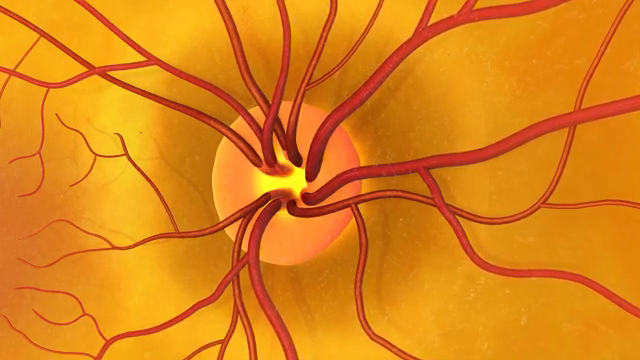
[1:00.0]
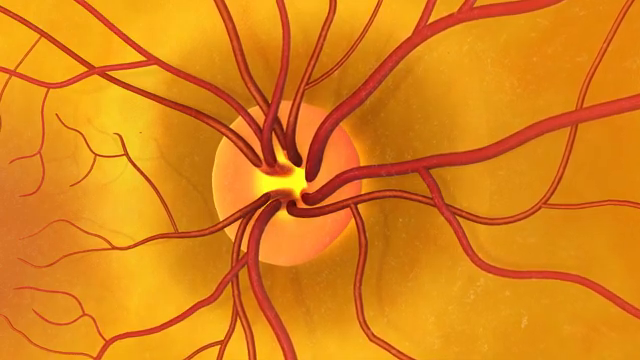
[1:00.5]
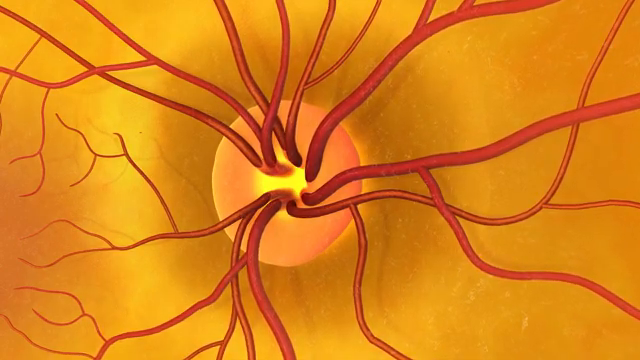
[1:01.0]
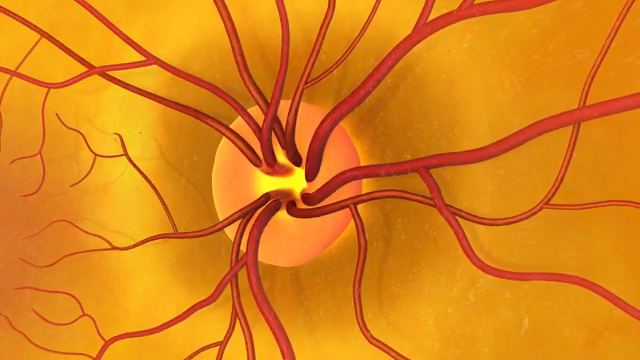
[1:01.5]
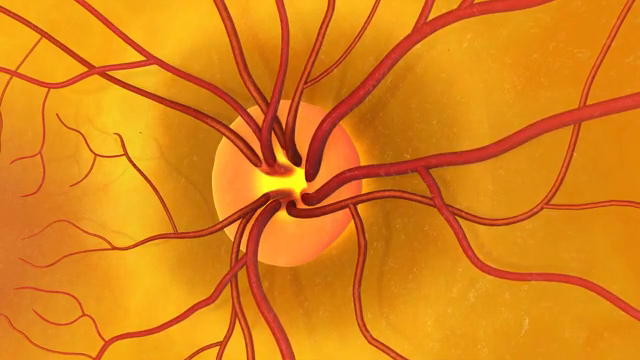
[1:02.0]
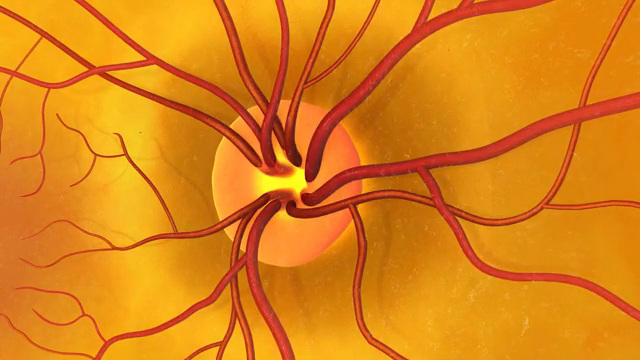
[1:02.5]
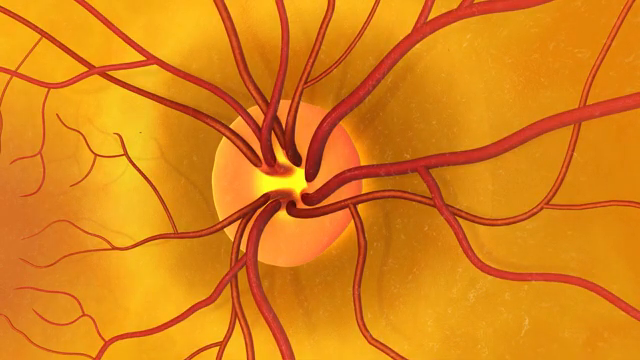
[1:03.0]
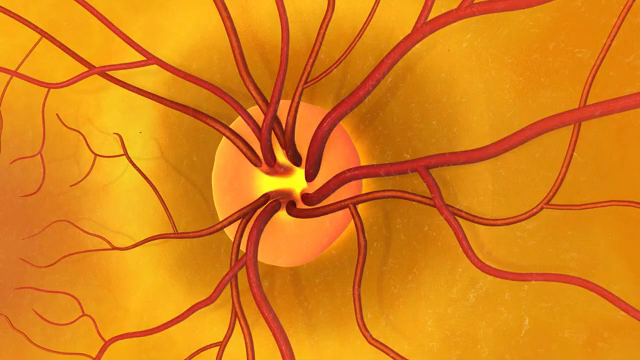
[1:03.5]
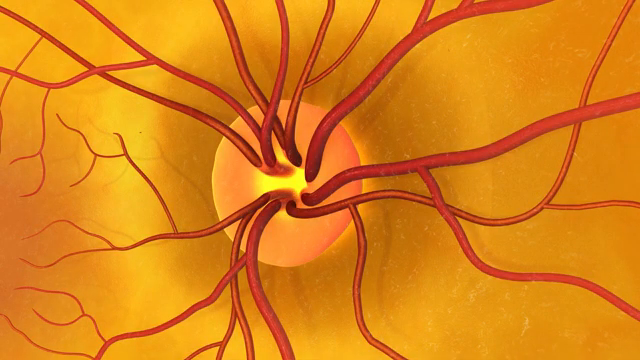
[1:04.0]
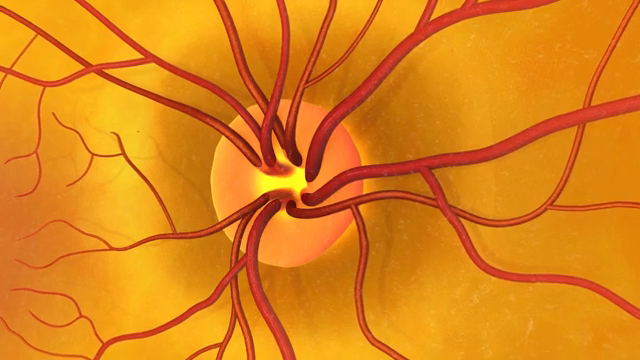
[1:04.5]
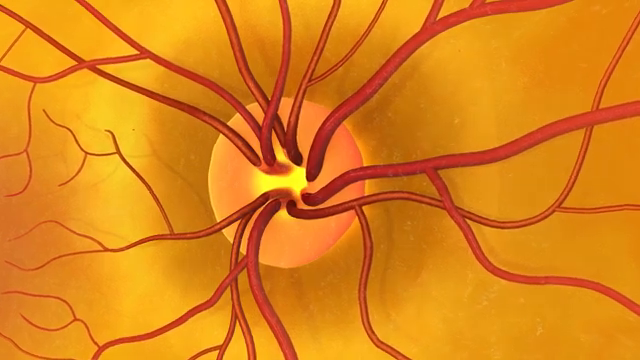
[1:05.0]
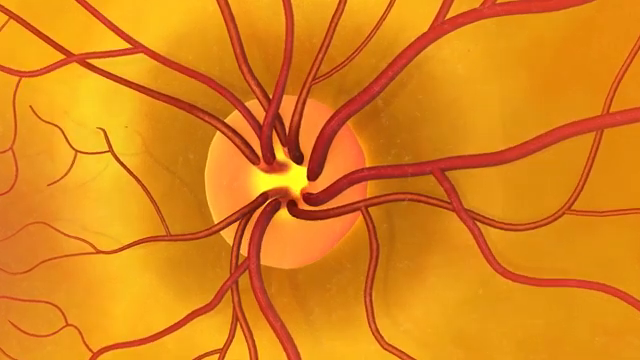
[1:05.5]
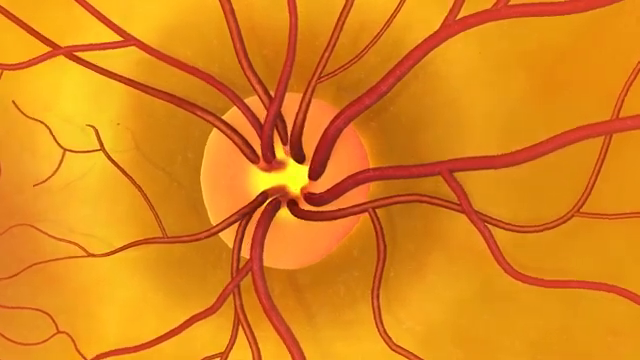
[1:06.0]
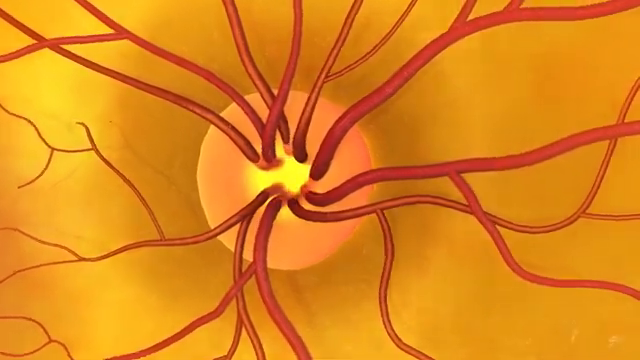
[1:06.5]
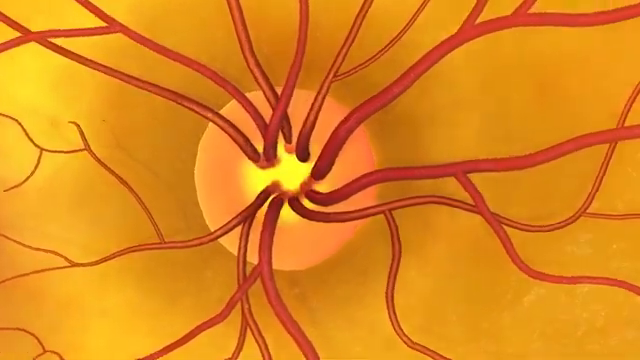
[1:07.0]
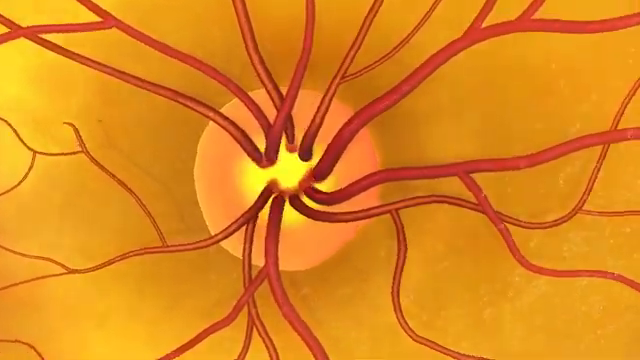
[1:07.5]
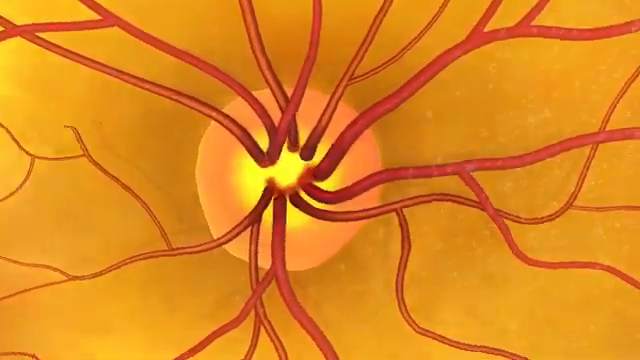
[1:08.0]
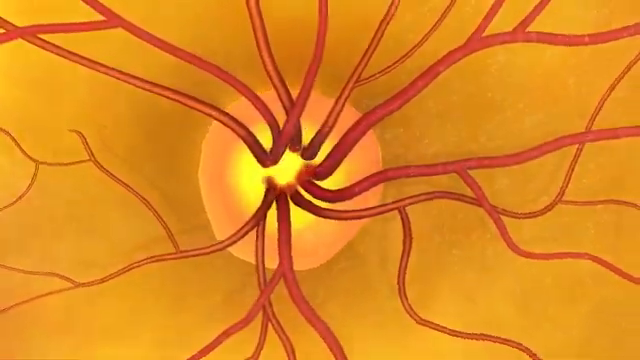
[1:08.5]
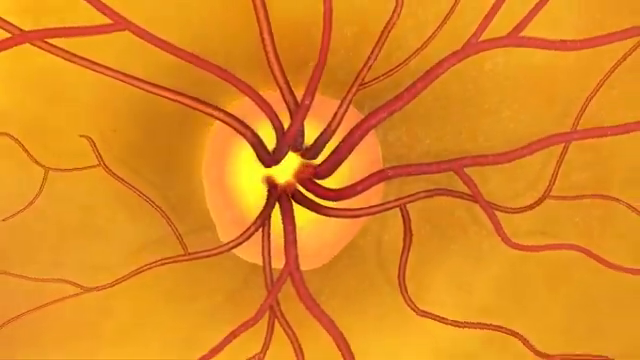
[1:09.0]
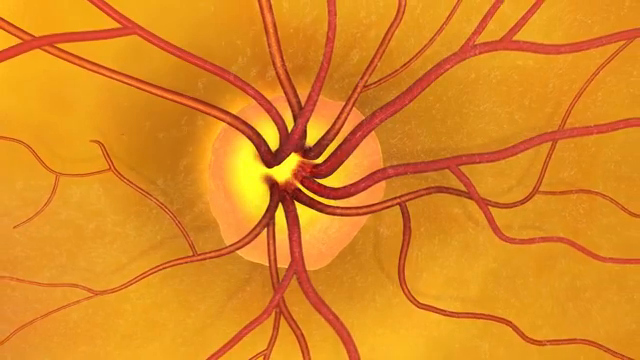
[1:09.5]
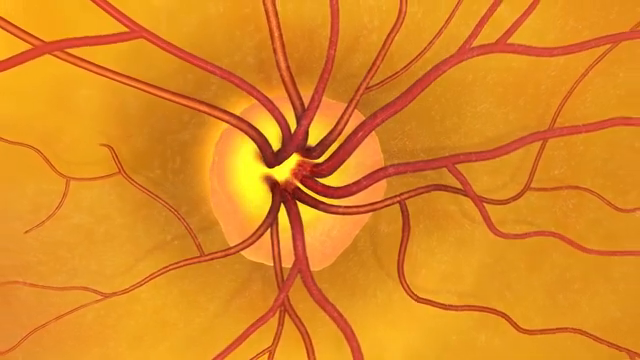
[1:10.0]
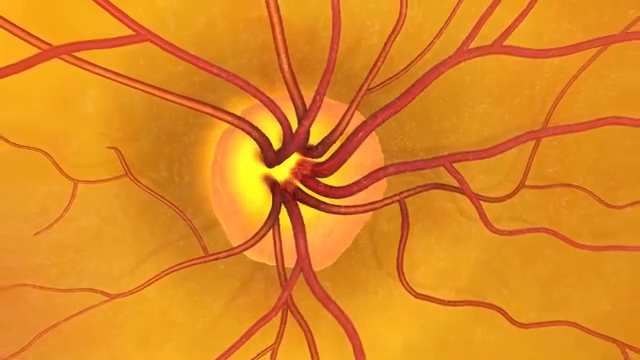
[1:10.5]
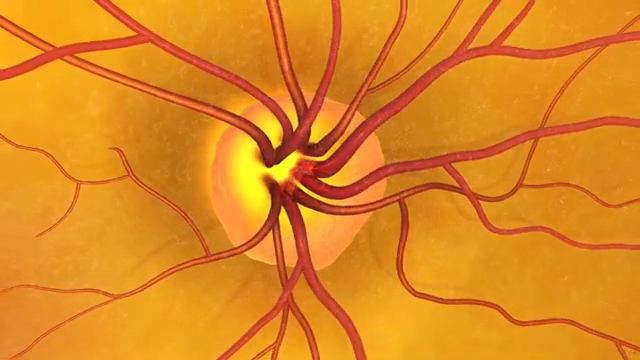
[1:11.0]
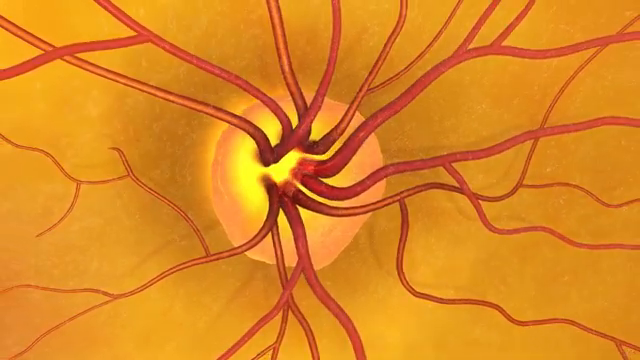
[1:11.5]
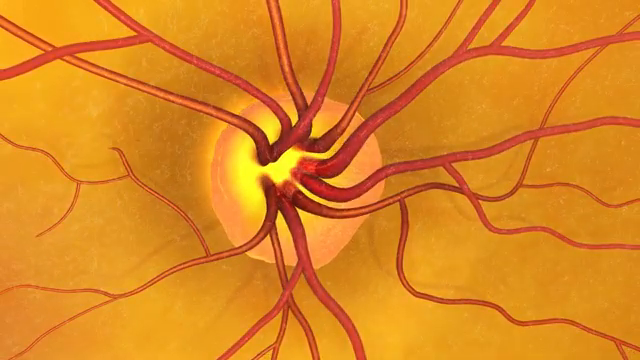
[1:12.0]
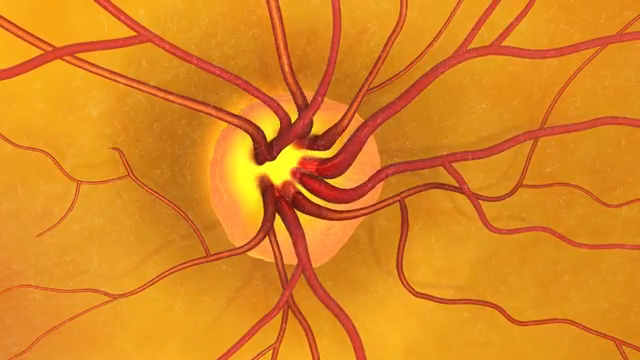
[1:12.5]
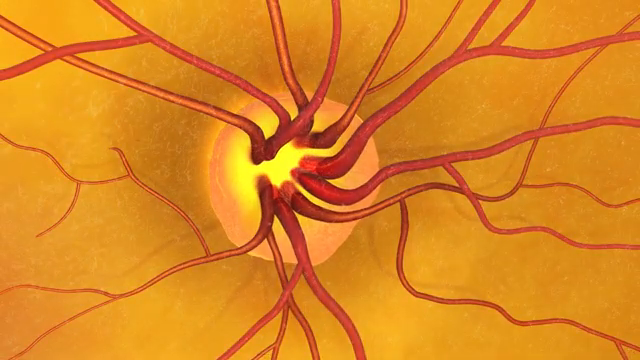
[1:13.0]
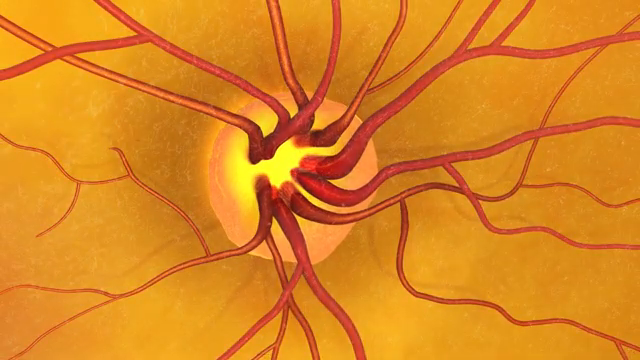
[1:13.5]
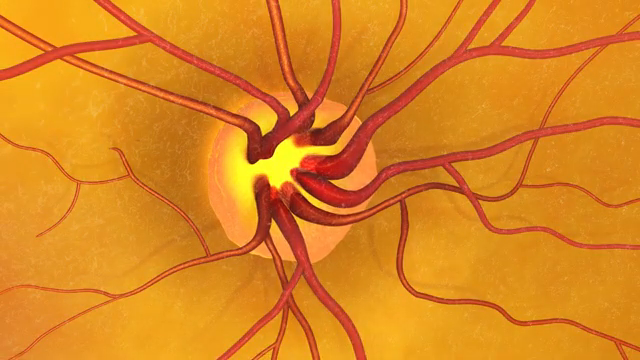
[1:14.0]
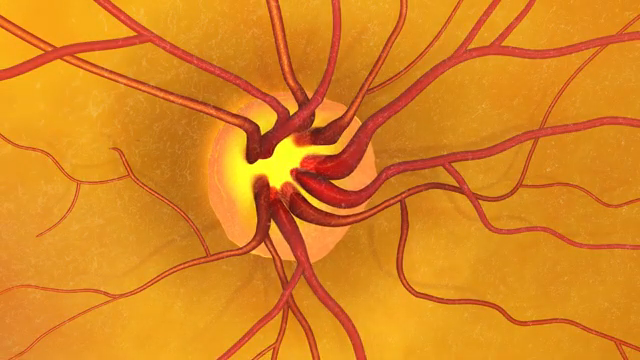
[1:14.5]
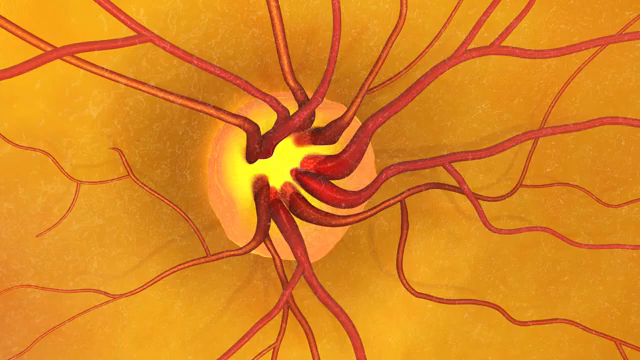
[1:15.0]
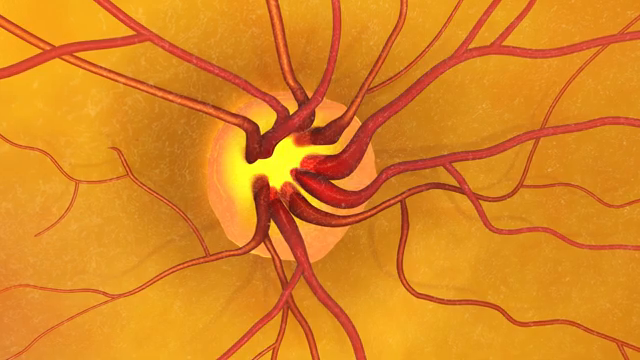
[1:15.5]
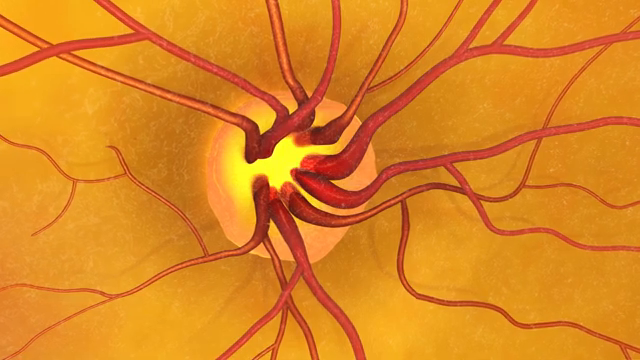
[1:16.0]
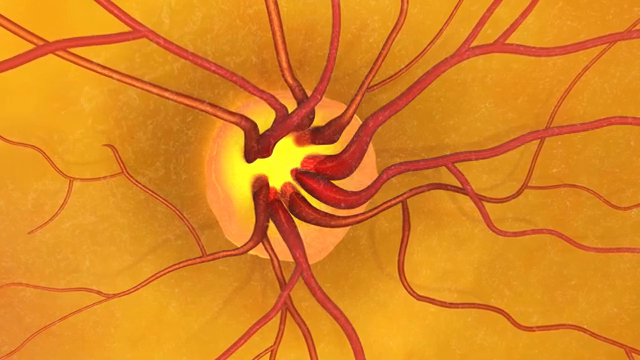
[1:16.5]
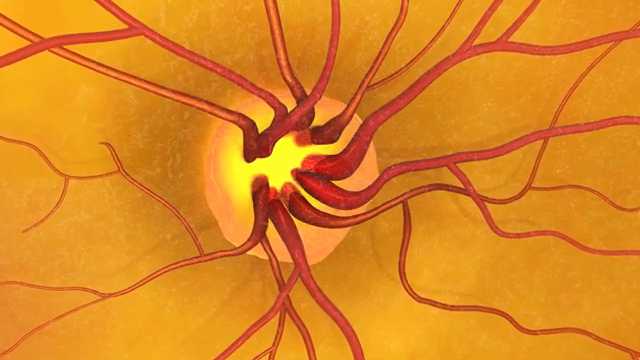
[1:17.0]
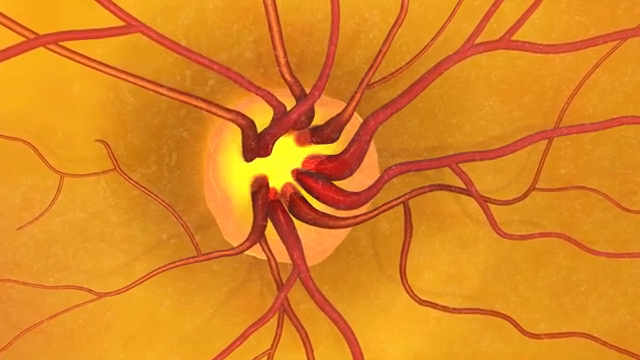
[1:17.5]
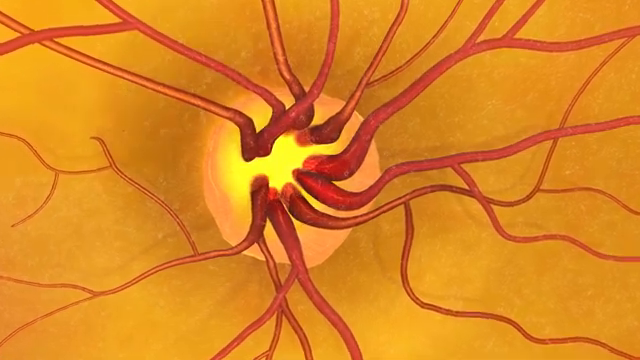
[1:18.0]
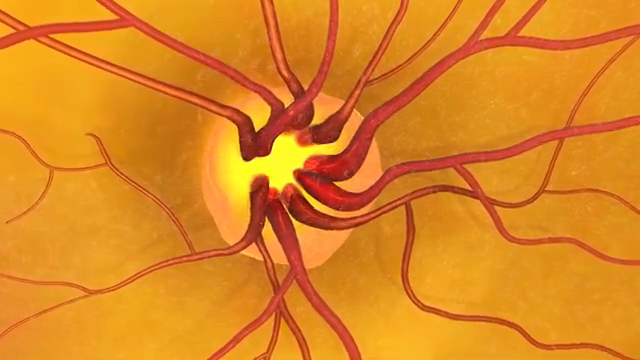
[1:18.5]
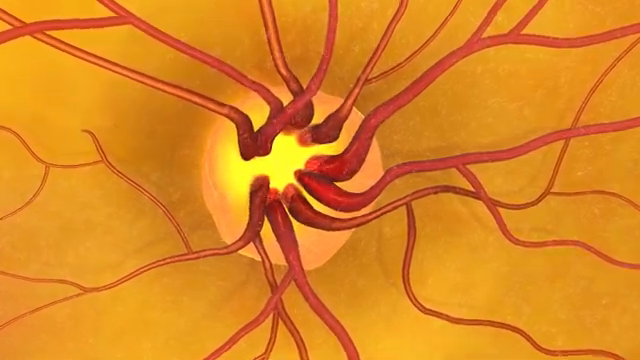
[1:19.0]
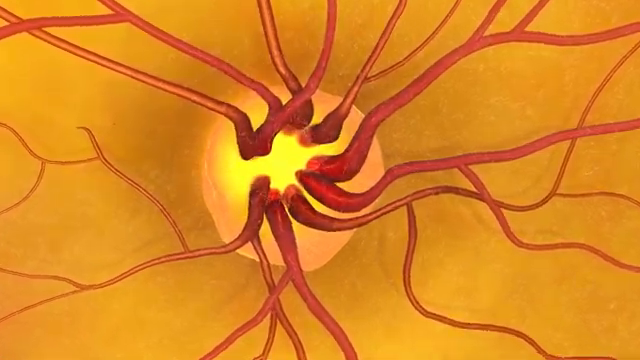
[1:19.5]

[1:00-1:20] The retina is shown, with a bunch of blood vessels exiting a hole through which a yellow light shines. The vessels spread out in different directions, and a bright yellow light pulses right in the middle where they emerge. The blood vessels are a realistic, computer-generated 3D animation rather than real footage. The area is circular and symmetric from left to right and from top to bottom.